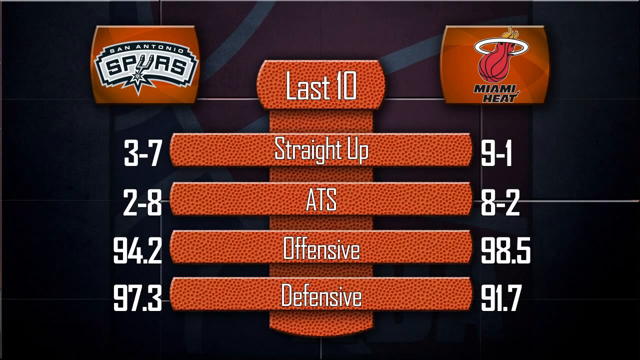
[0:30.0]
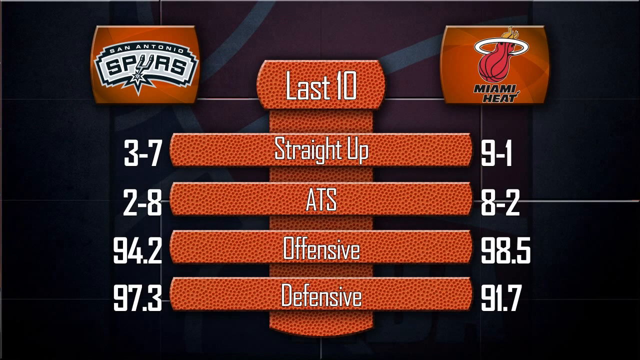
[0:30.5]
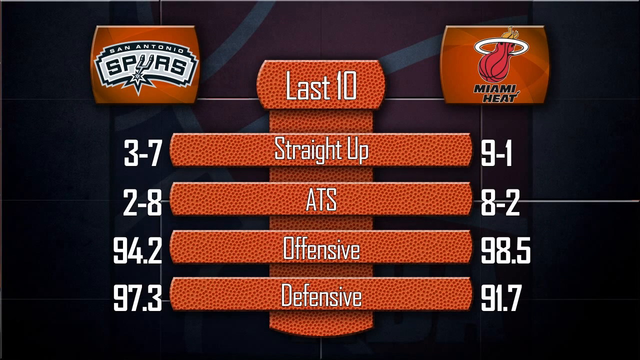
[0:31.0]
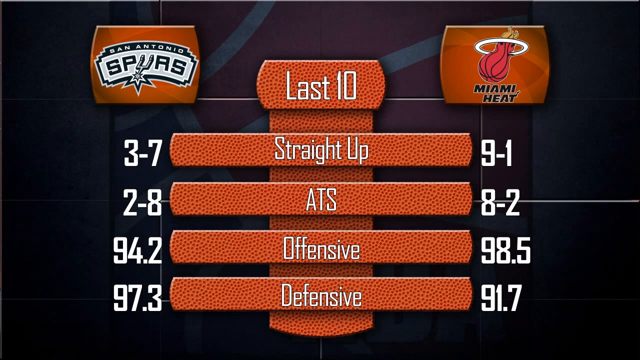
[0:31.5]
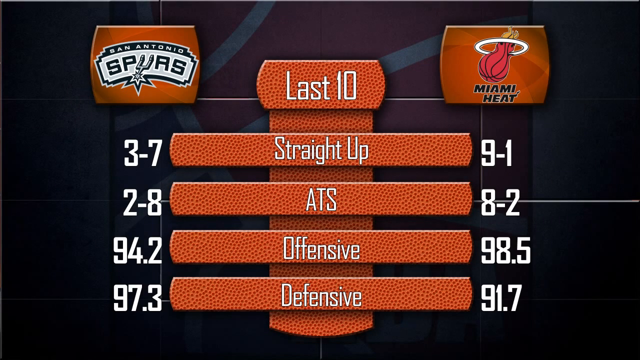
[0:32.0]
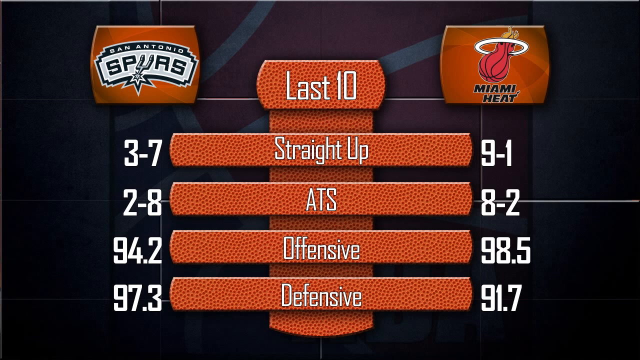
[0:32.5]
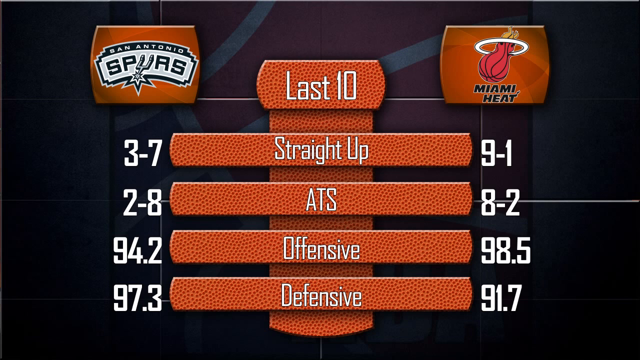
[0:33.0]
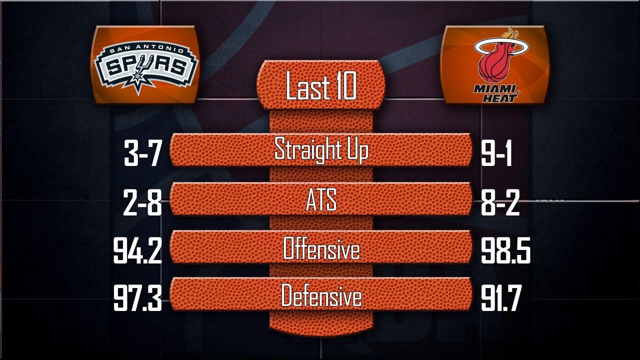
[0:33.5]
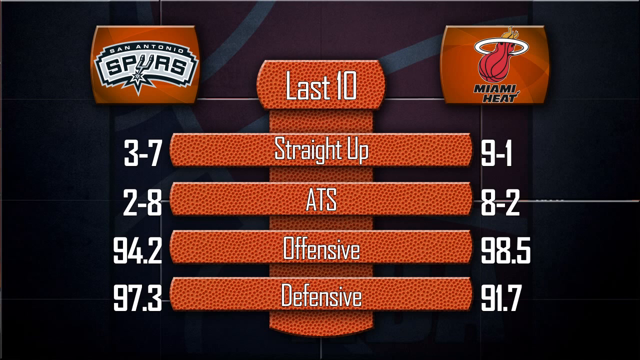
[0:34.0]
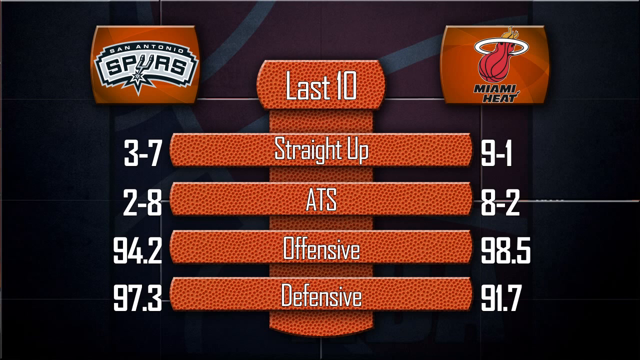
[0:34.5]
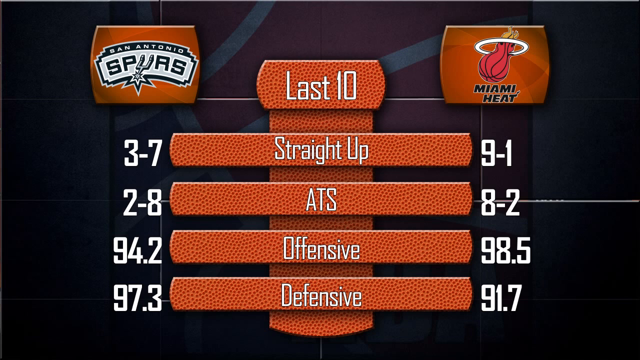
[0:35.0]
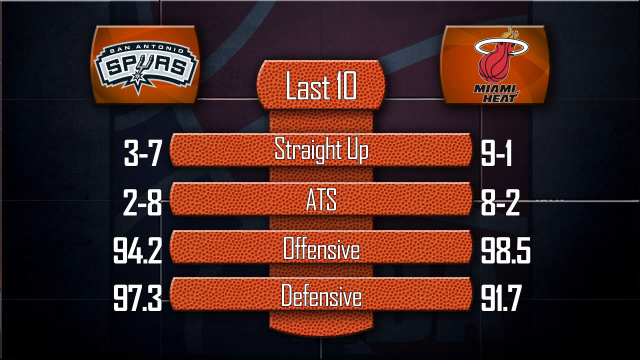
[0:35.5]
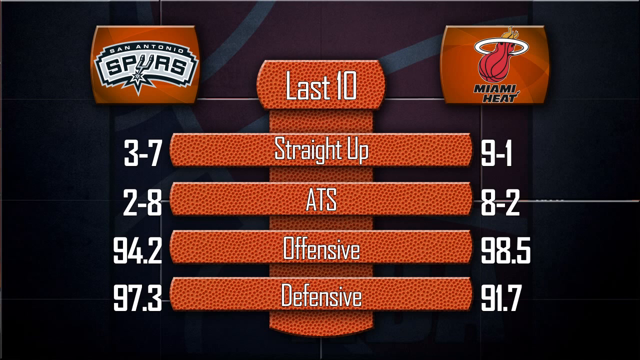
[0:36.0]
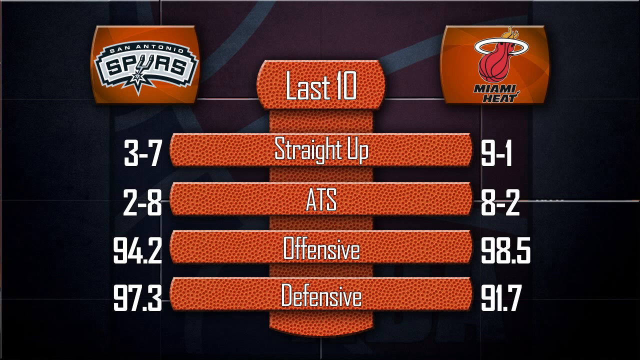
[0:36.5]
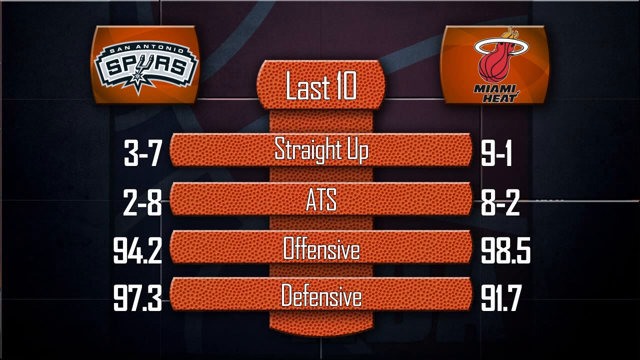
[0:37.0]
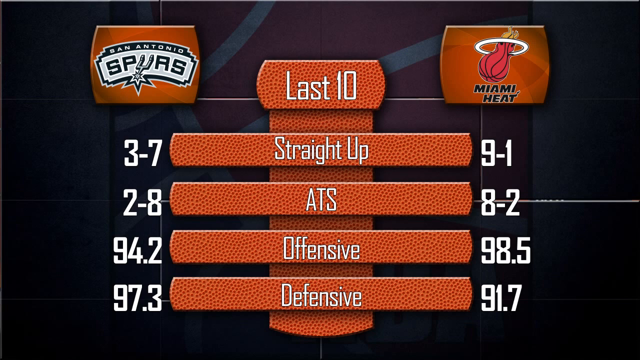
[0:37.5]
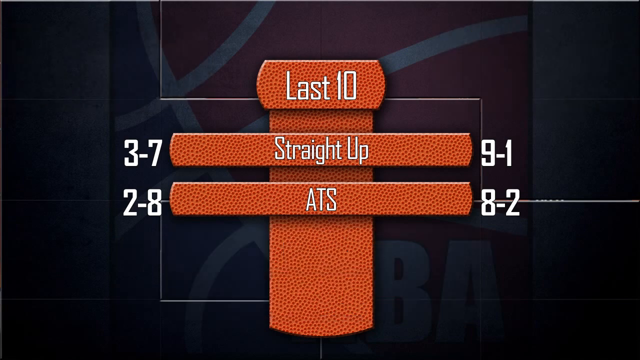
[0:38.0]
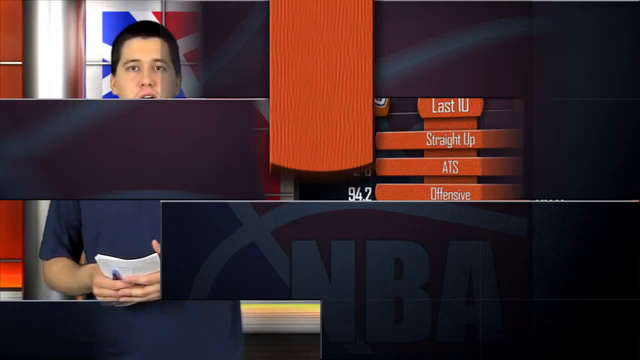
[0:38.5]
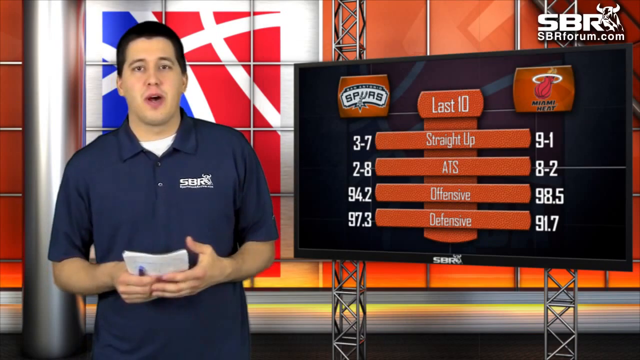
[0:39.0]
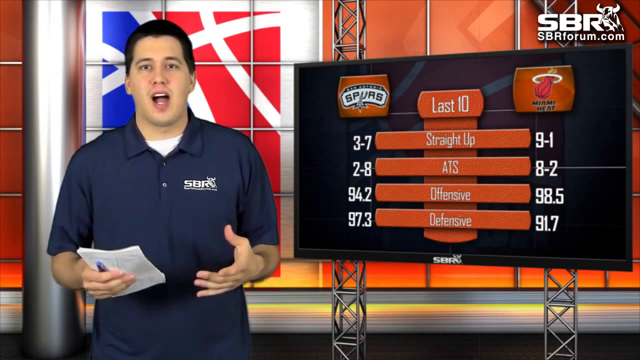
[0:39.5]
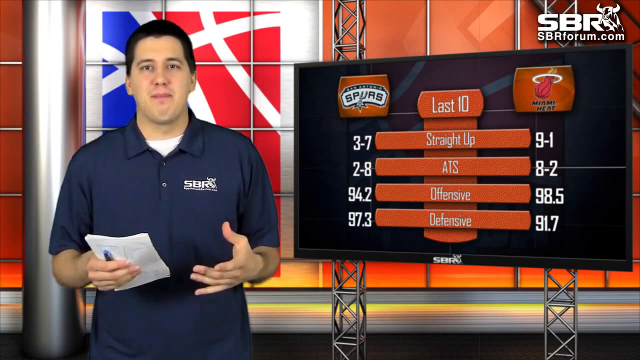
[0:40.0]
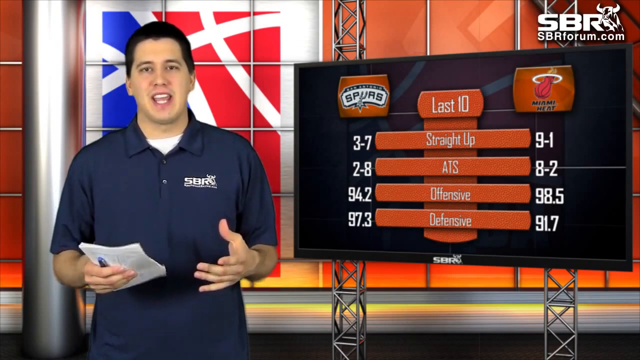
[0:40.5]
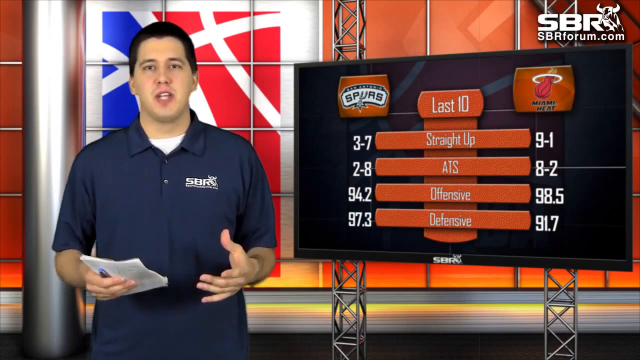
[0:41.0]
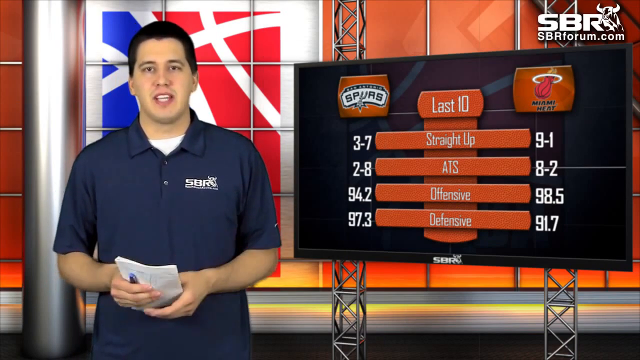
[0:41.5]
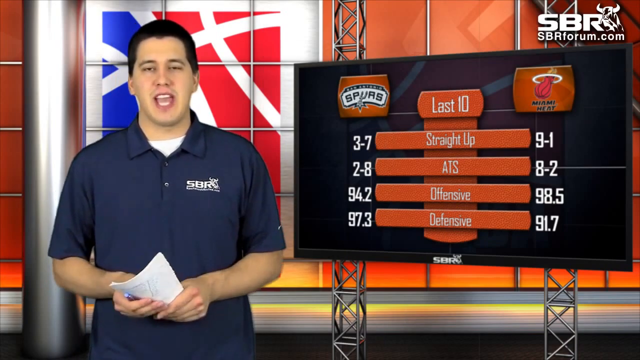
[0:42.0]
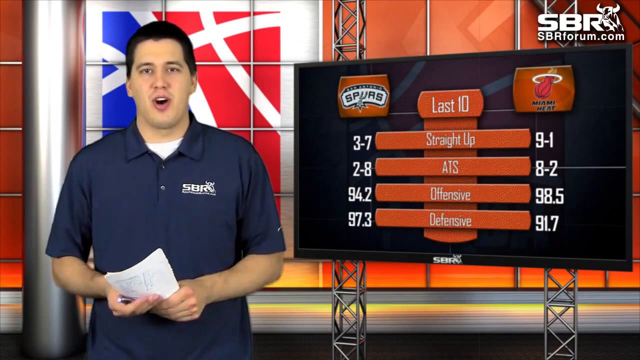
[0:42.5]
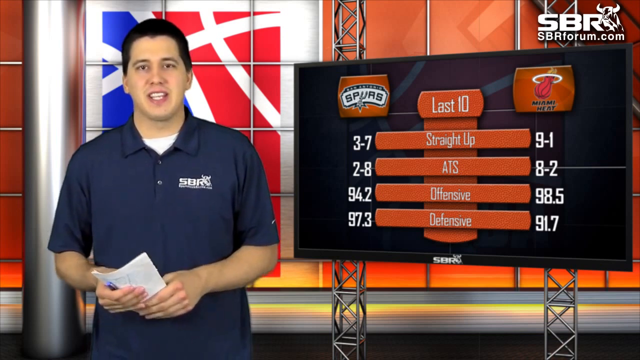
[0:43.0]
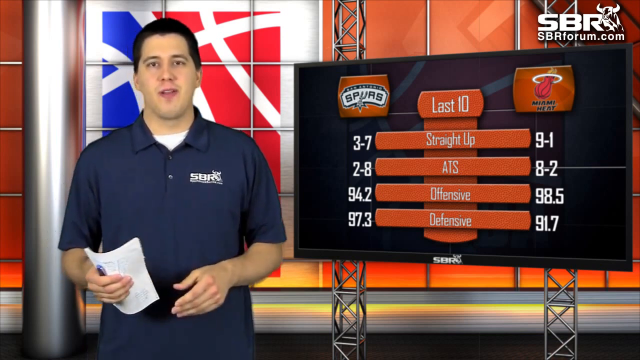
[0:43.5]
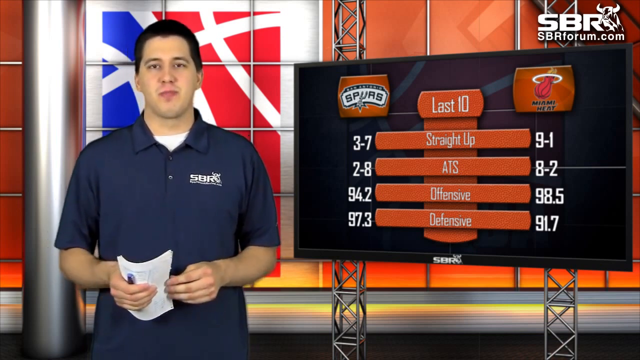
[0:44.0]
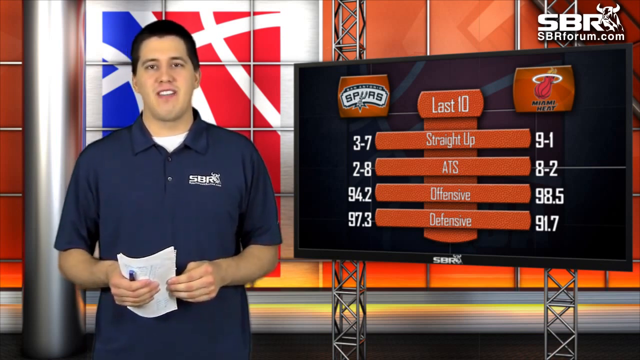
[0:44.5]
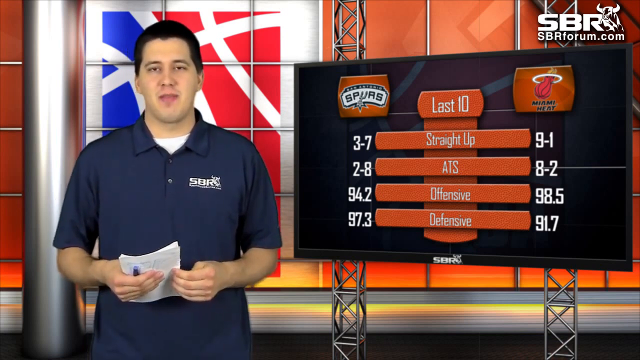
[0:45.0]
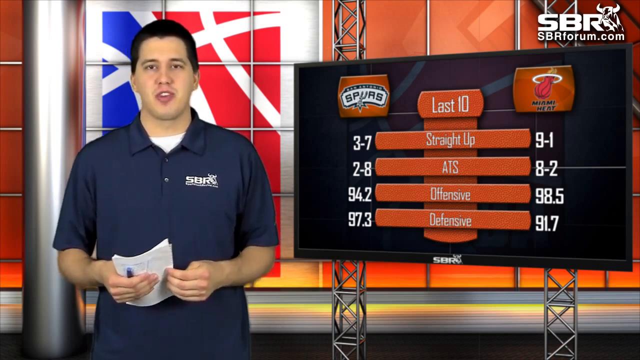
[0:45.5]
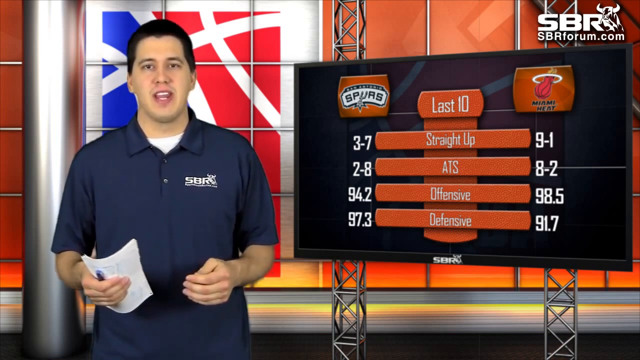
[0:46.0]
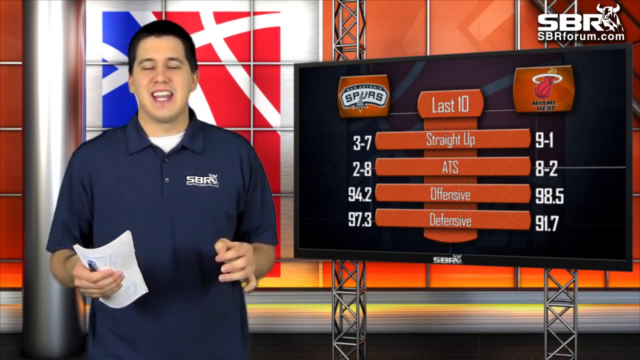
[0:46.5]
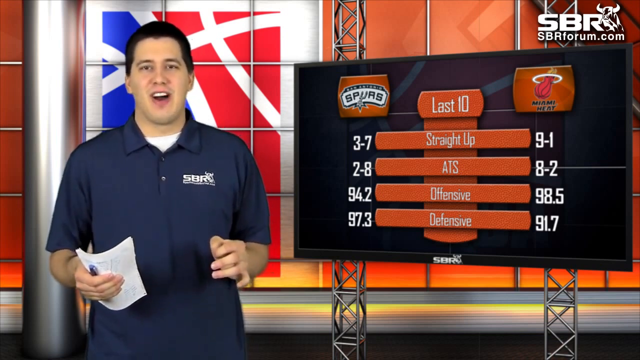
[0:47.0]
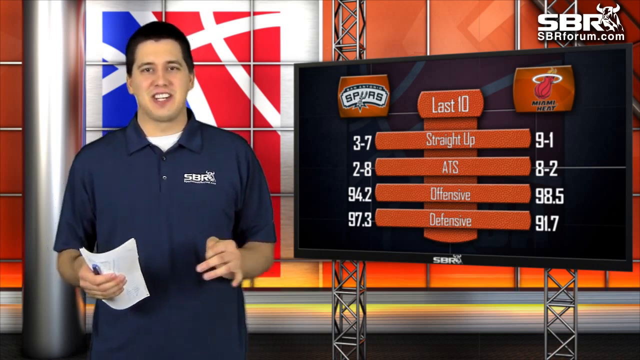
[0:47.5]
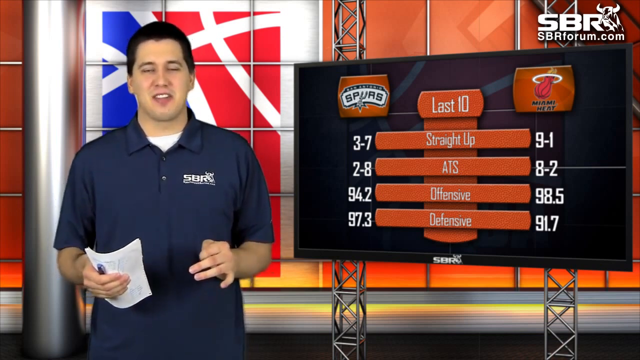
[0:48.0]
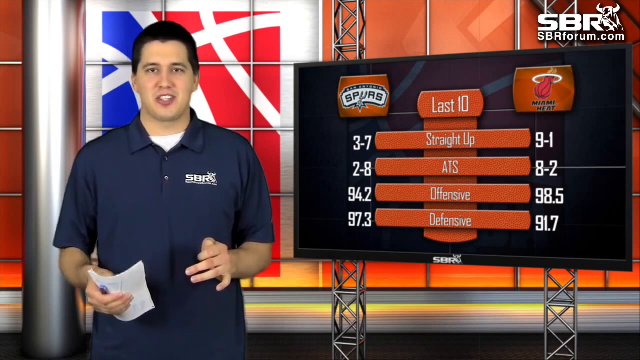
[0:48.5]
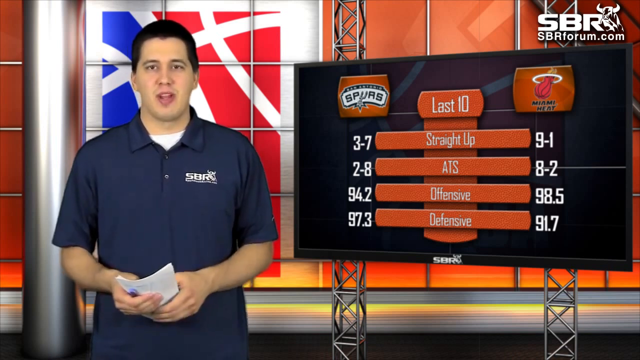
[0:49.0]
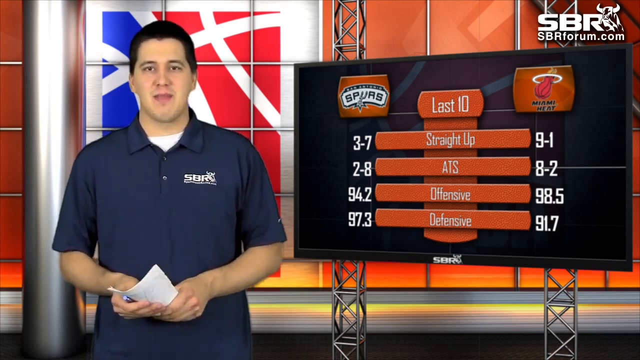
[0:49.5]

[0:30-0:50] A scoreboard on the screen shows the Spurs against the Miami Heat, comparing the ATS, offensive and defensive points of the two teams, with the teams shown in the center of the screen. On the left-hand section of the screen is a red basketball. The scene has a black background with an orange foreground and white text over the orange.